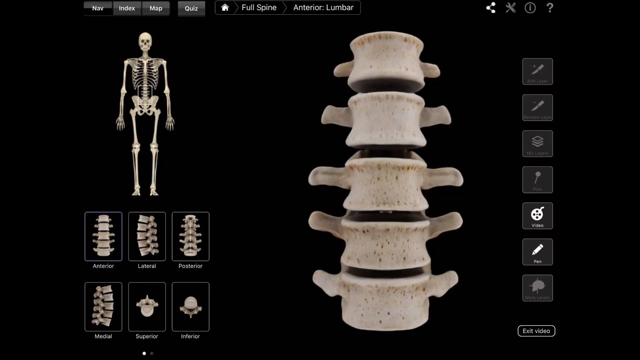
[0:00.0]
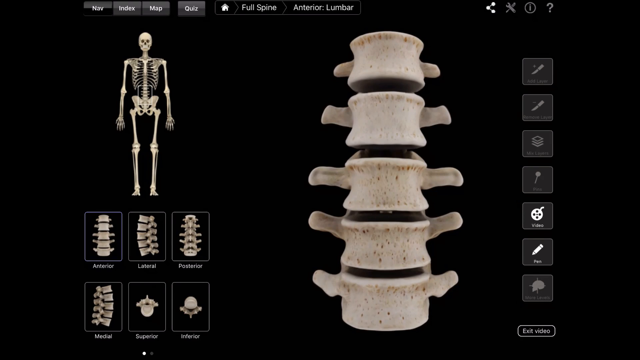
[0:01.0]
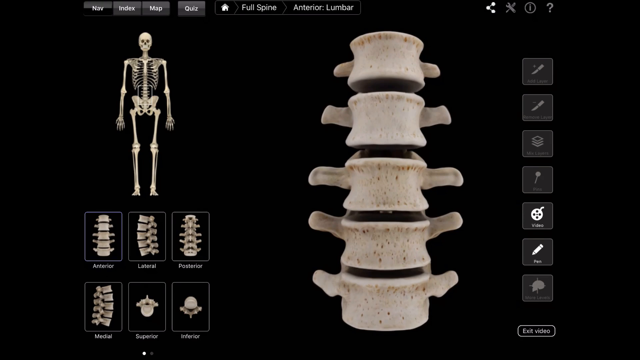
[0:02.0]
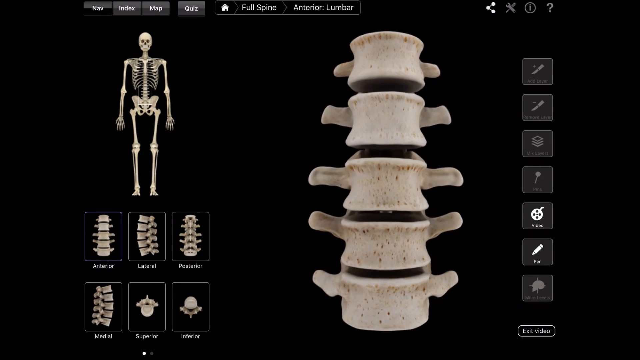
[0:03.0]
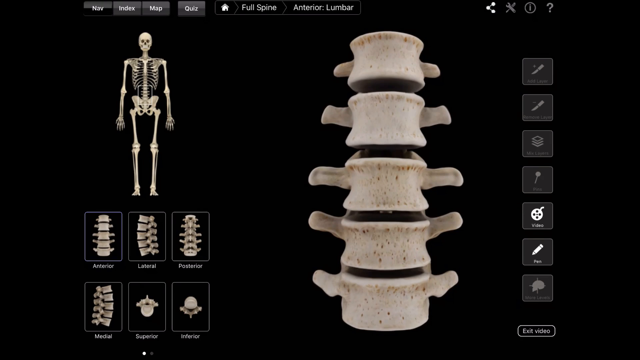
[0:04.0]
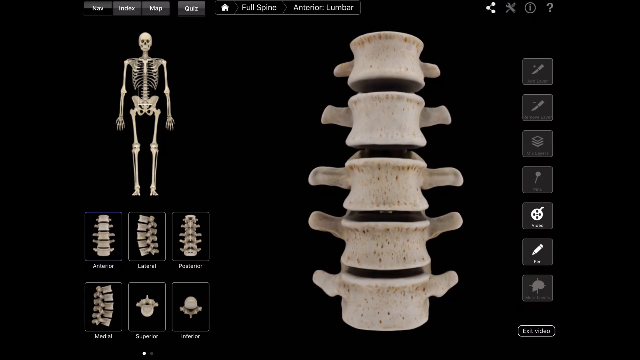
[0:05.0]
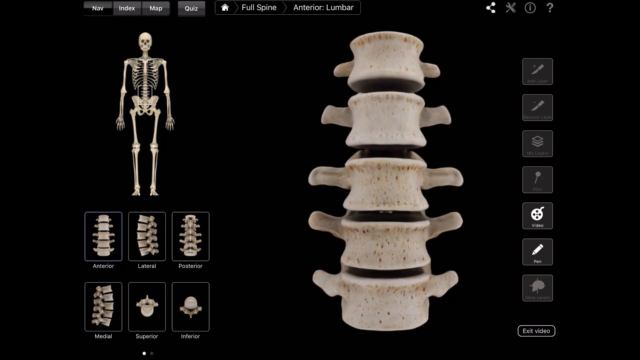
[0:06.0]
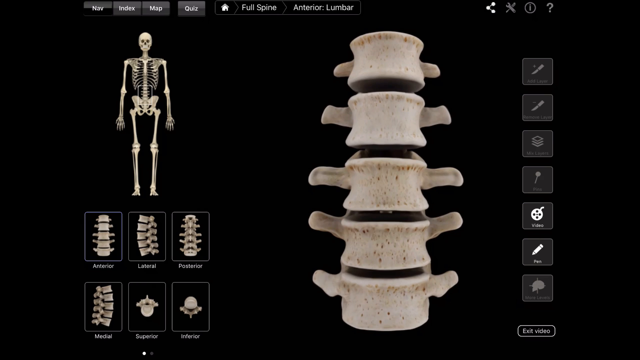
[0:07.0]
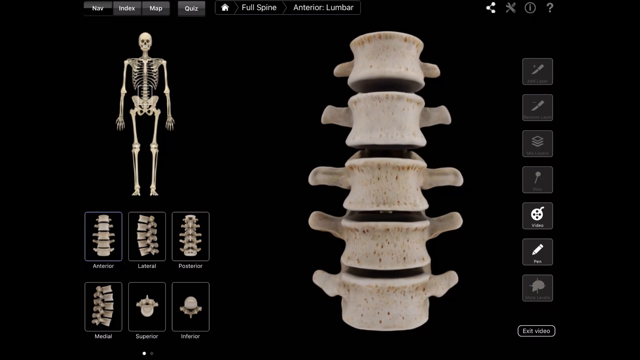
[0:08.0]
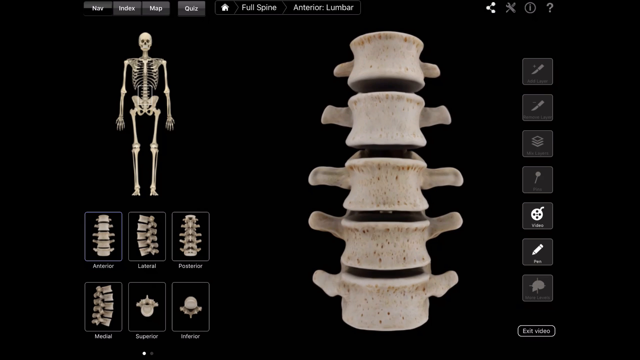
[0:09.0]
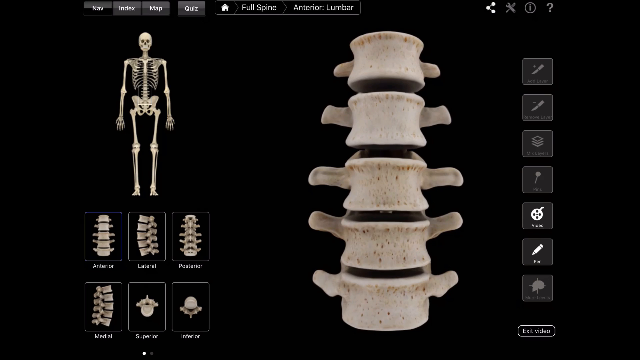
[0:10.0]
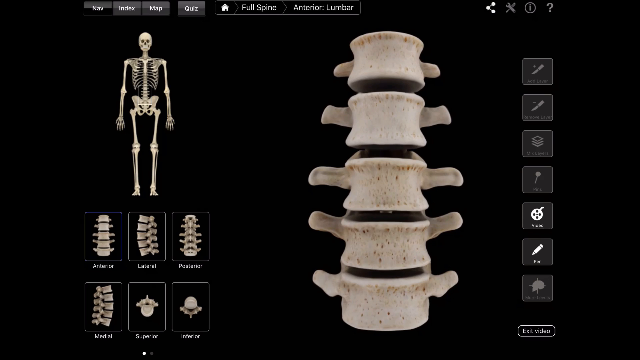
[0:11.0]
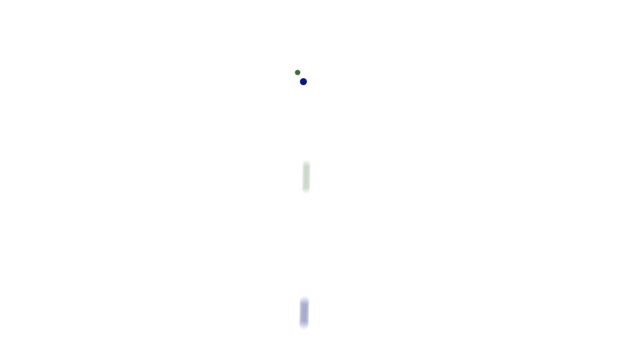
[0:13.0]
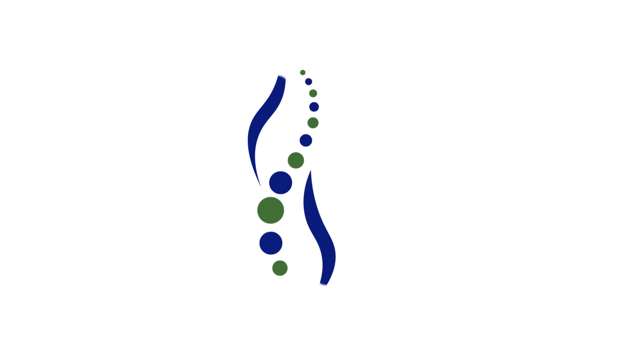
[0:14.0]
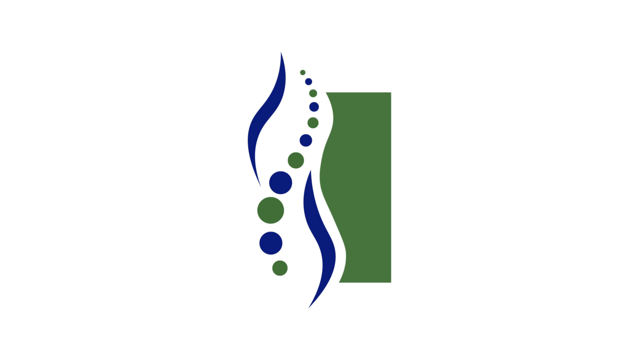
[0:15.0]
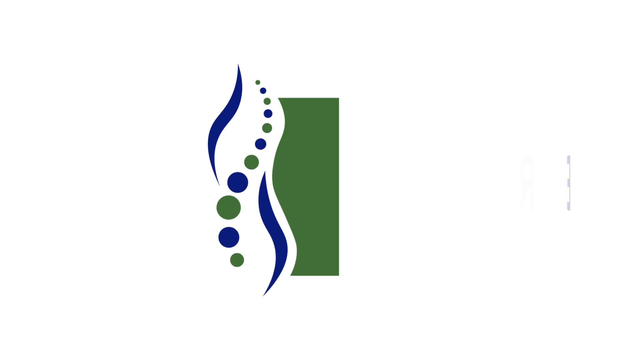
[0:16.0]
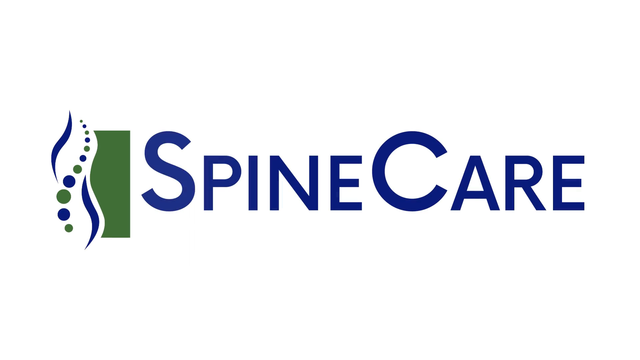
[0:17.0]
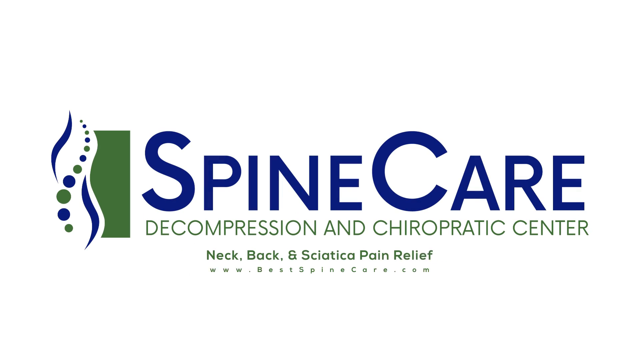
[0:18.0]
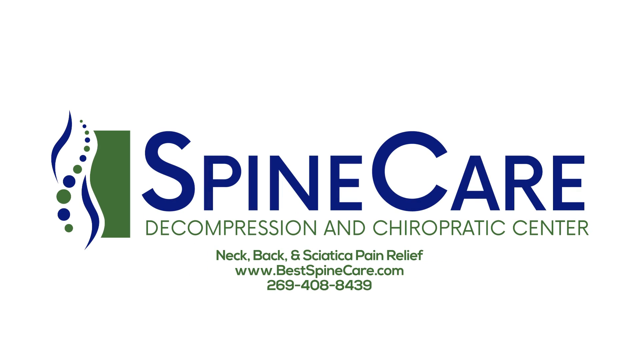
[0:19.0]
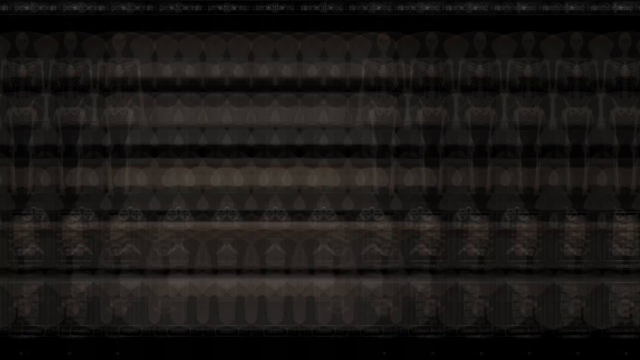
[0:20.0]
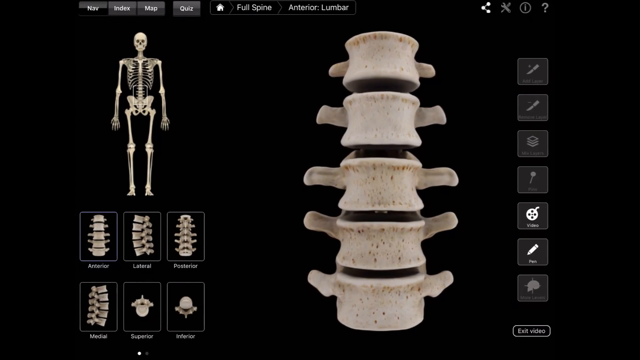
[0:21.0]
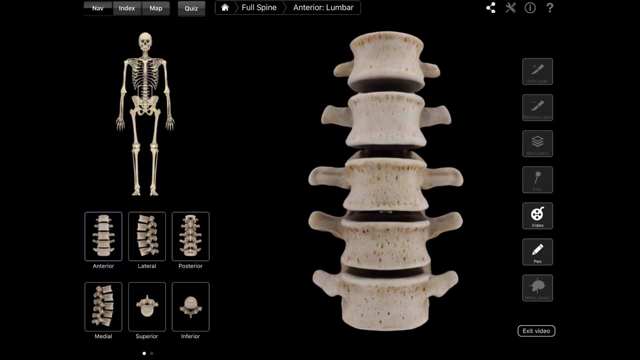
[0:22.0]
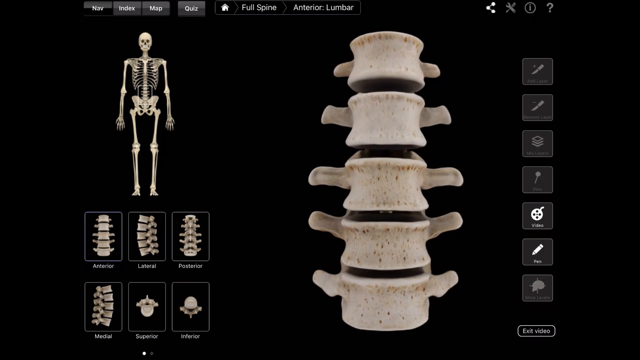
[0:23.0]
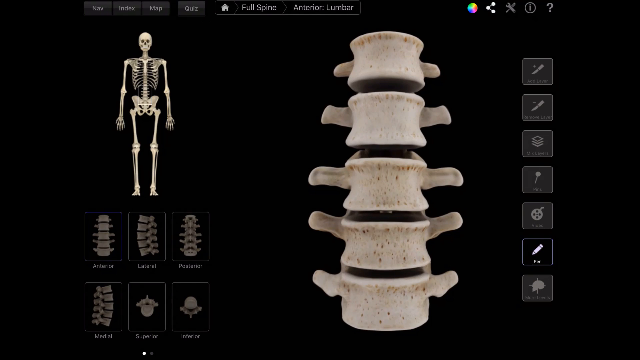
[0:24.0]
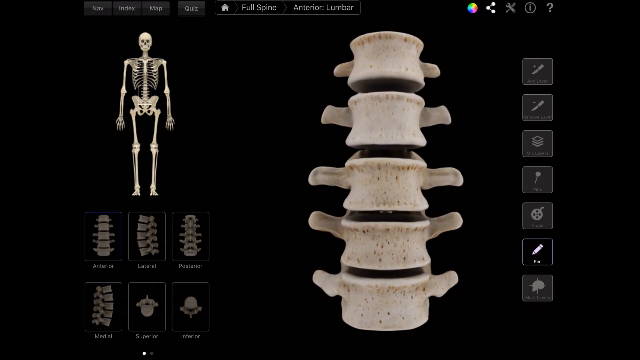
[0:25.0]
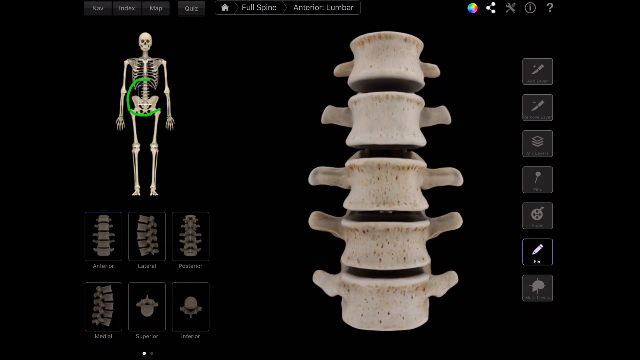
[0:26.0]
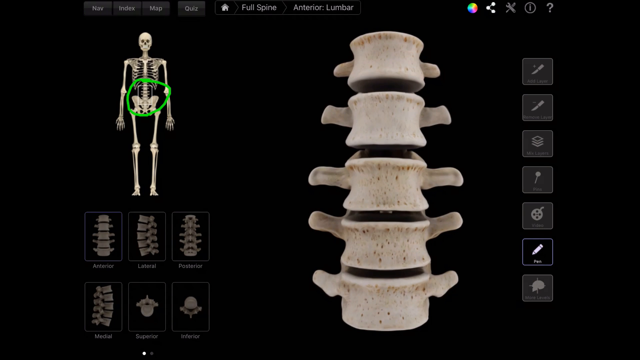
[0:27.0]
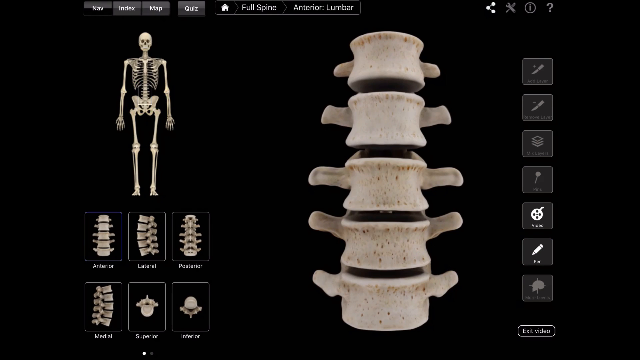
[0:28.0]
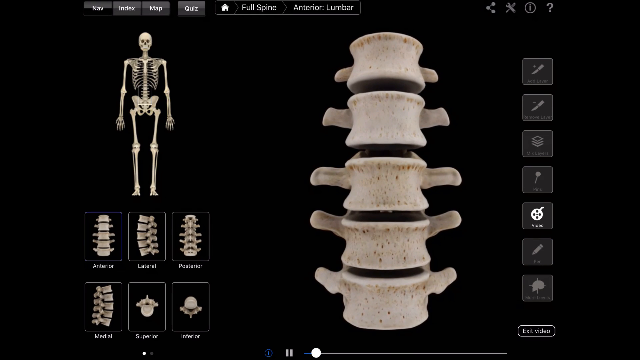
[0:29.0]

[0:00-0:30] A full-body skeleton appears on the left-hand side, with images underneath highlighting specific sections of the spine: anterior, lateral and posterior. On the right-hand side is a zoomed-in photo, apparently of the anterior view out of the three. Also on the right are buttons for image or video editing in the software, such as drawing and adding layers, basic photo editing tools. Along the top are further options to navigate, go to the index and take a quiz. Labels for the image read "full spine, anterior lumbar."